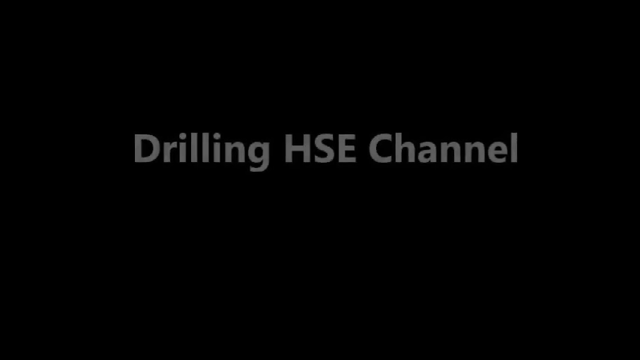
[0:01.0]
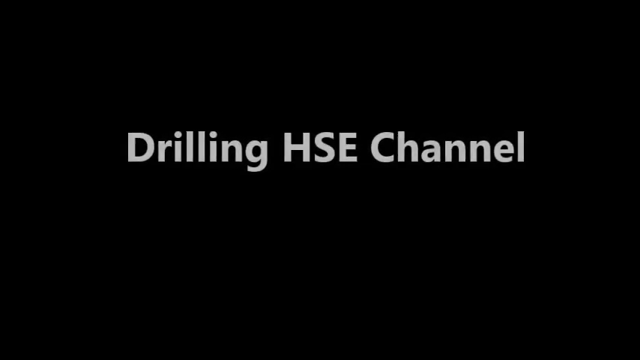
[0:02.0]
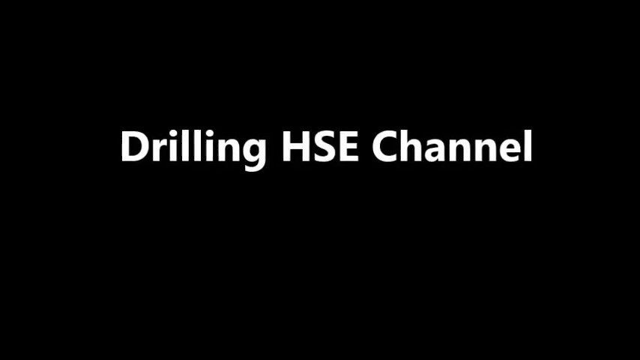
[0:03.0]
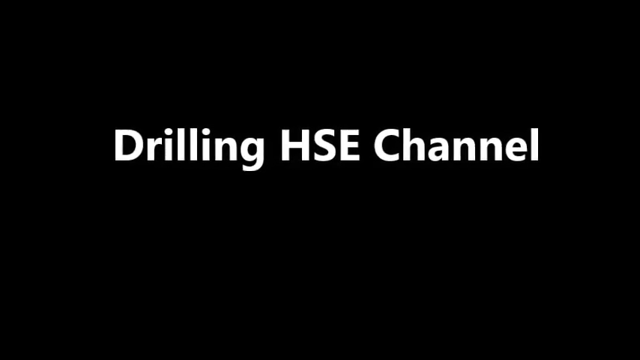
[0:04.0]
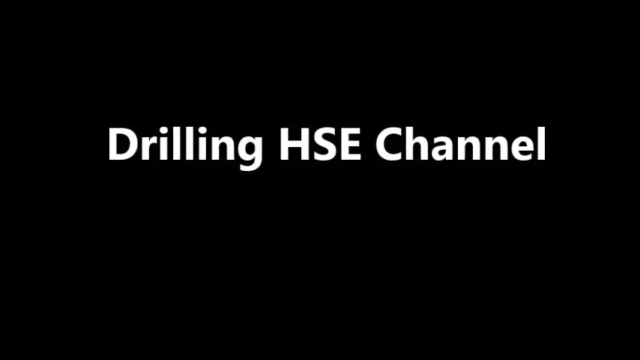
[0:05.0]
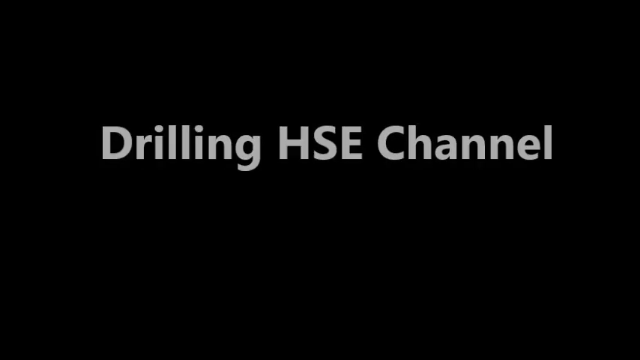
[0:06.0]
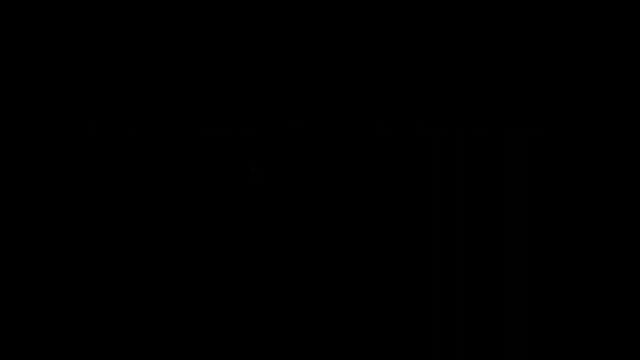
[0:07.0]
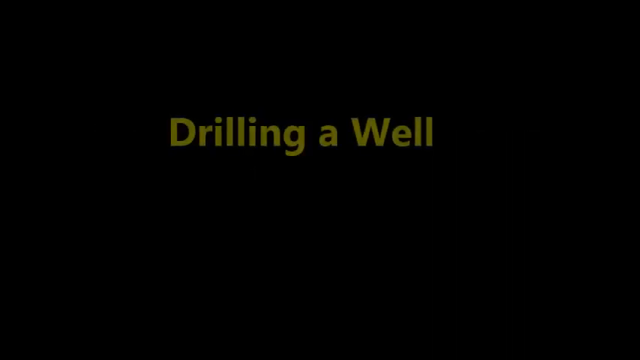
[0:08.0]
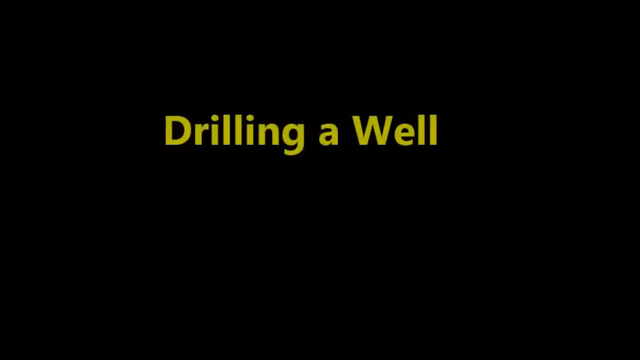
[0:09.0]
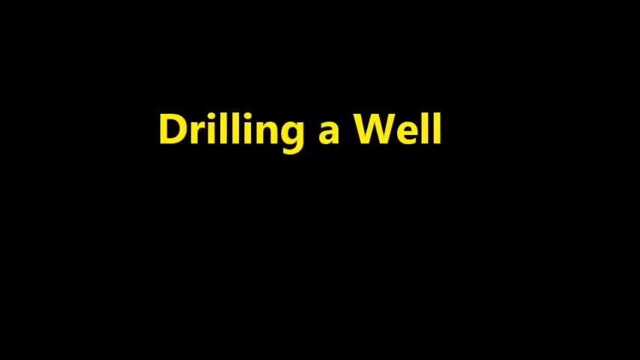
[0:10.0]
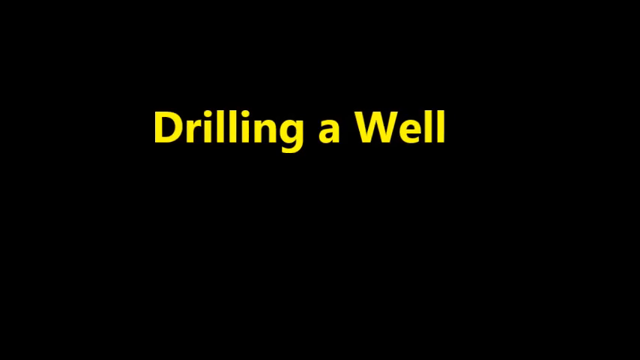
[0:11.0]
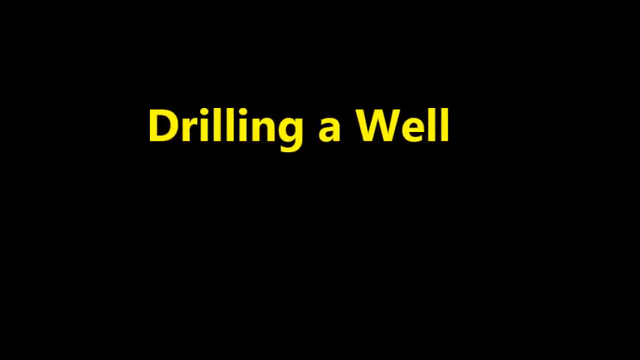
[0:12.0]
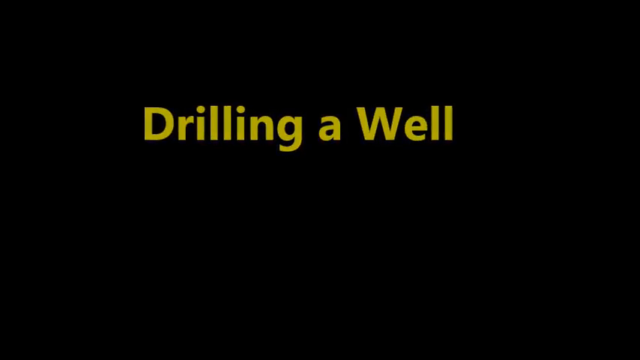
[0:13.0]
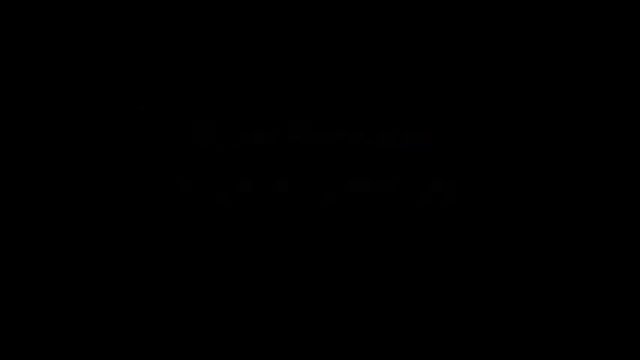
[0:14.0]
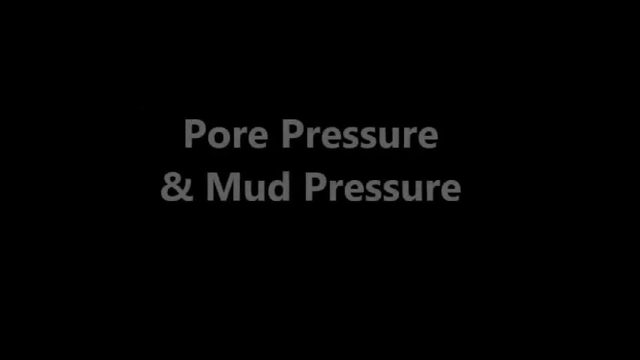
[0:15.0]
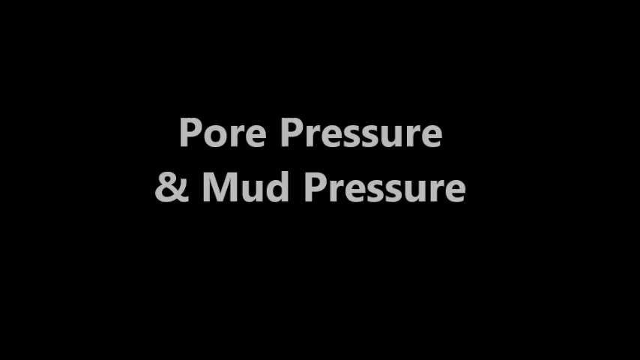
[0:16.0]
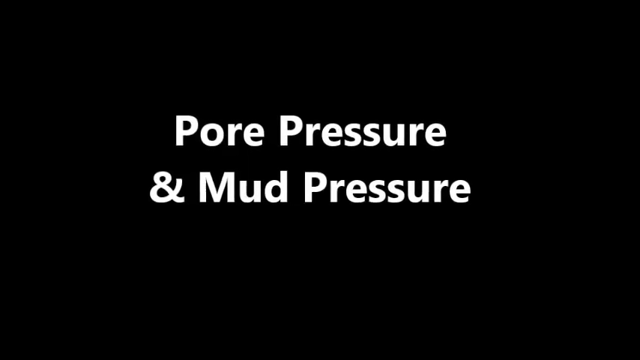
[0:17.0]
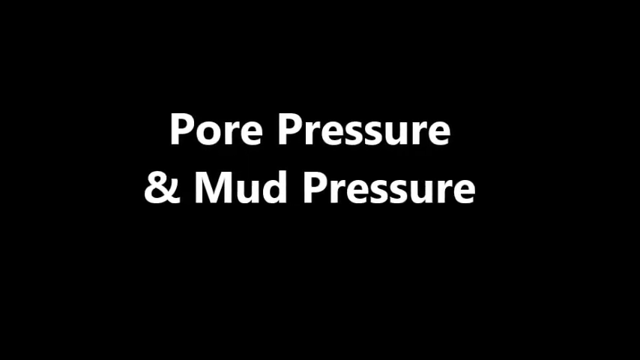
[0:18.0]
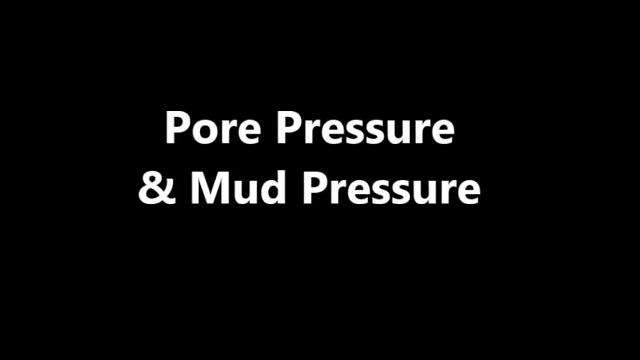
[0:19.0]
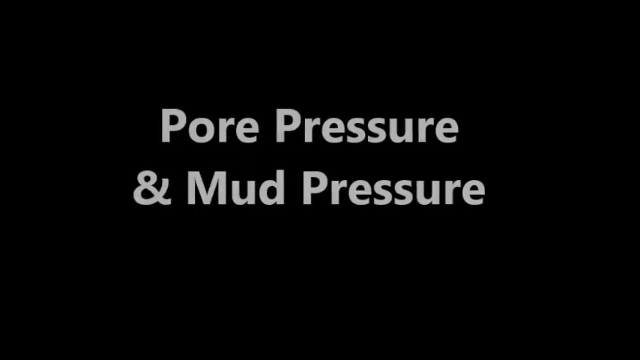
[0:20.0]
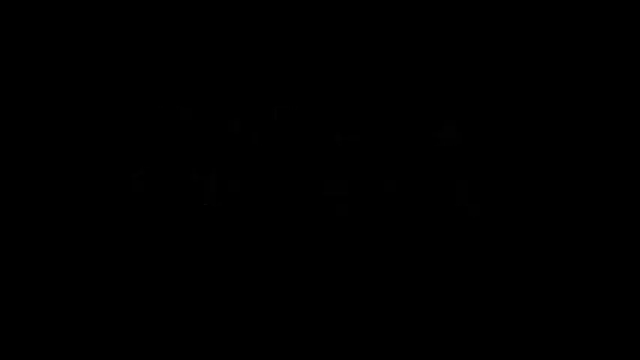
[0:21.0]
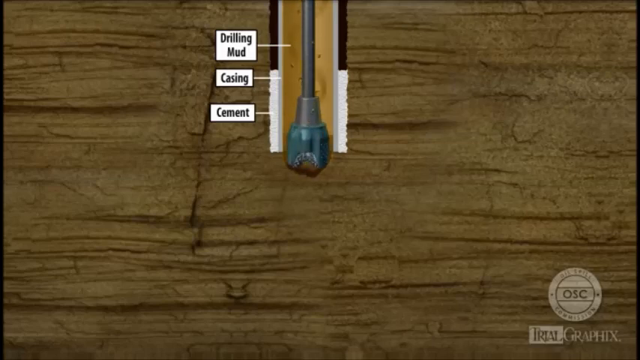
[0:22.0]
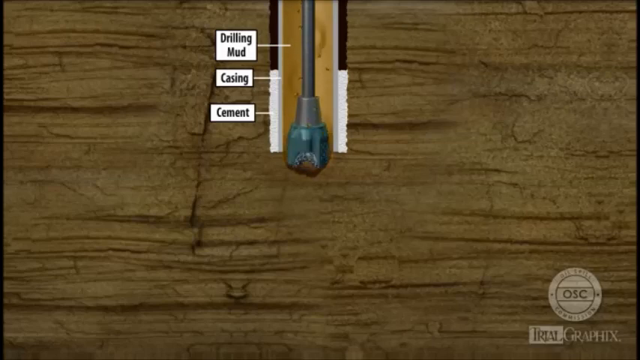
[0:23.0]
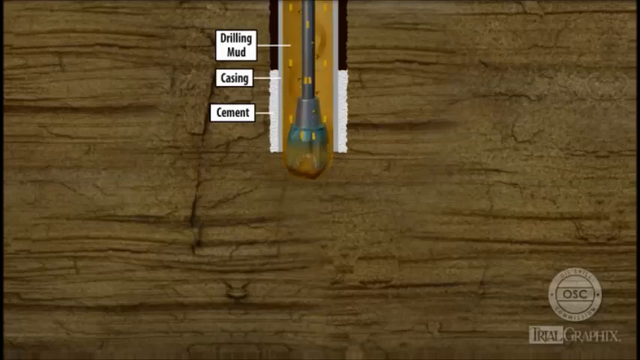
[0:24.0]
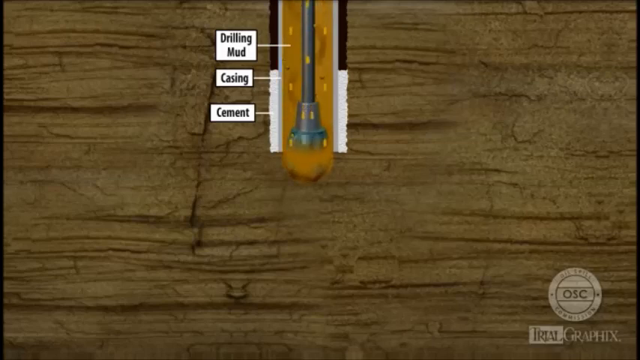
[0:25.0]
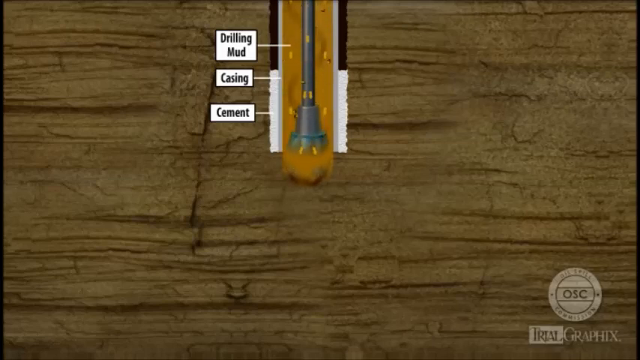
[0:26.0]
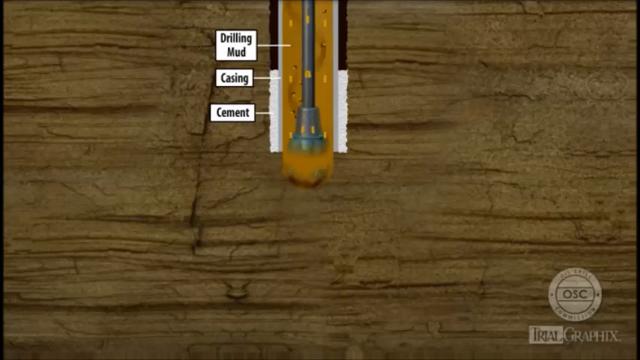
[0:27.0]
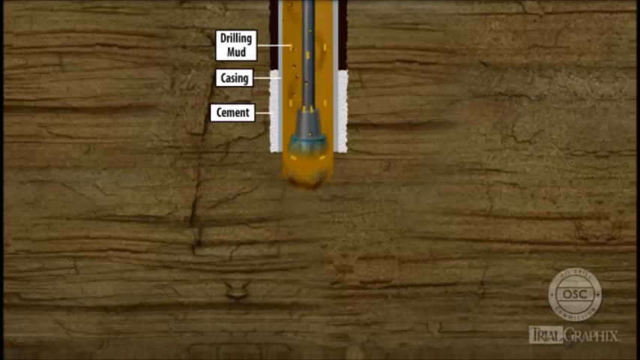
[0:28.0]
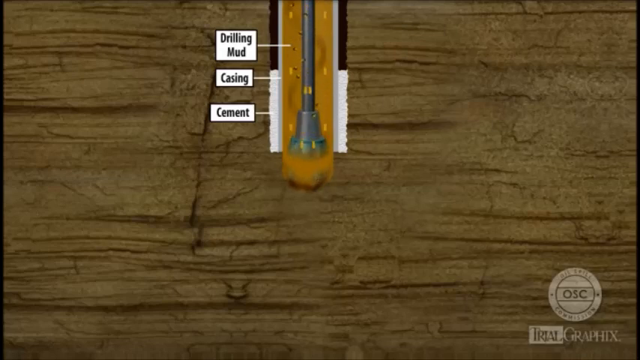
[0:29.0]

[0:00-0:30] Words fade in slowly against a black background: "drilling HSE channel" in white font comes into clear view, followed by "drilling a well" in yellow, also on black, and then "pore pressure" and "mud pressure". The scene cuts to a drill moving downwards into what looks to be a brown piece of wood. Labels describe what surrounds the drill: the words "drilling mud", "casting" and "cement" appear individually in black font, each aligned with where that part is found and placed within a square or rectangular white shape. As the drill moves downwards, particles move upwards.